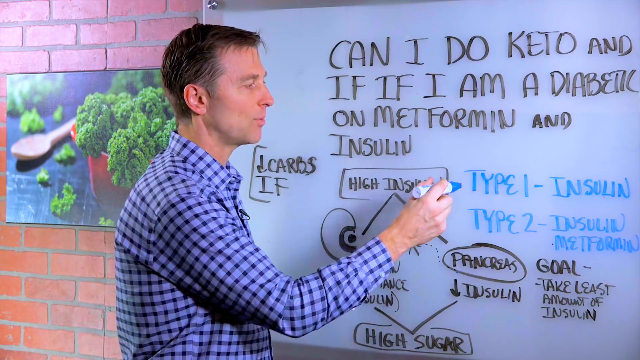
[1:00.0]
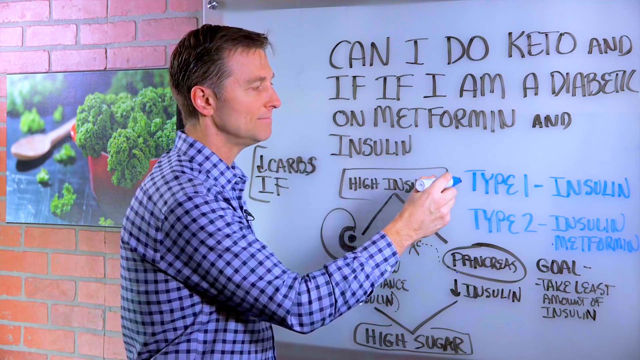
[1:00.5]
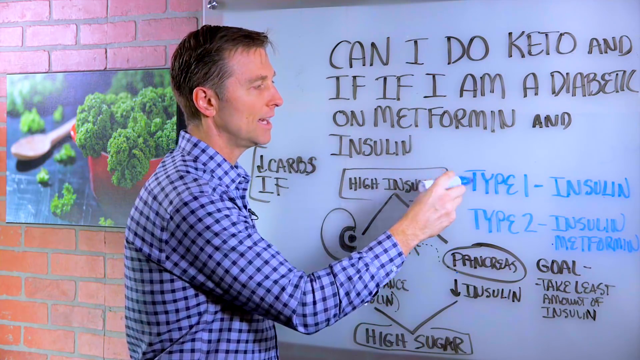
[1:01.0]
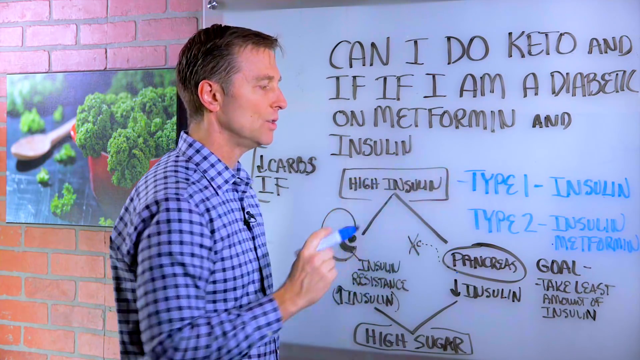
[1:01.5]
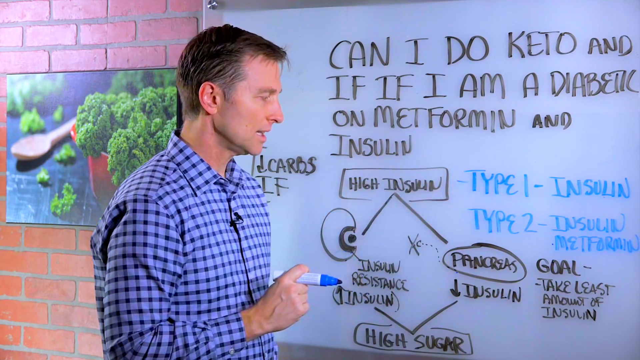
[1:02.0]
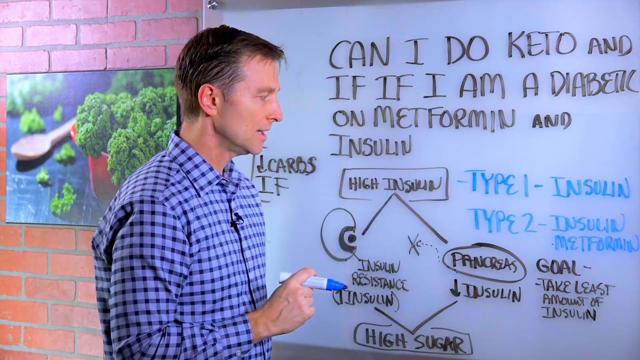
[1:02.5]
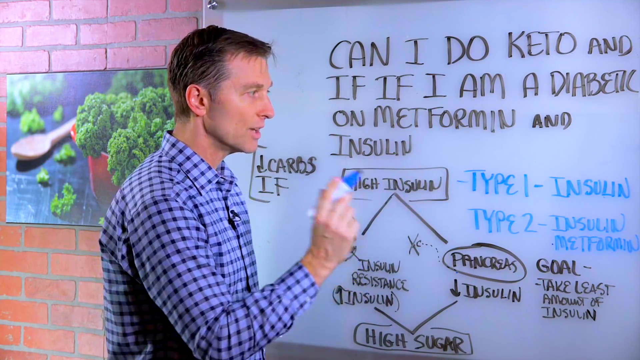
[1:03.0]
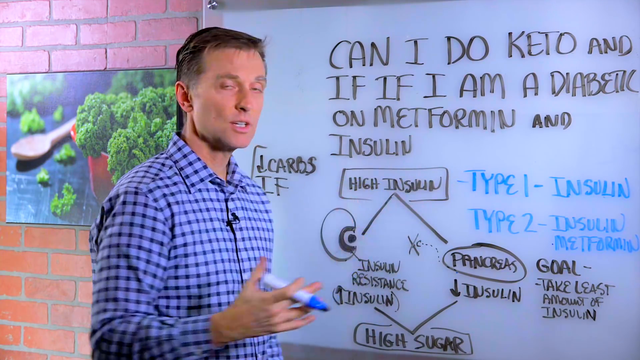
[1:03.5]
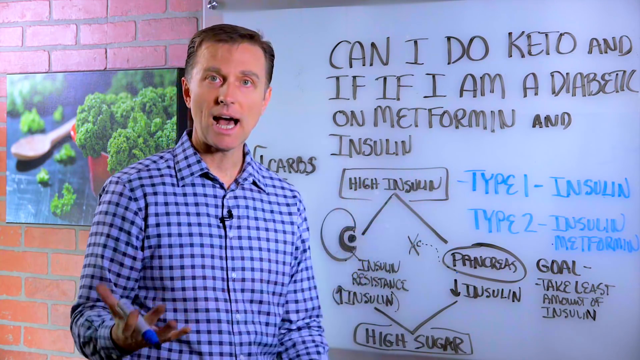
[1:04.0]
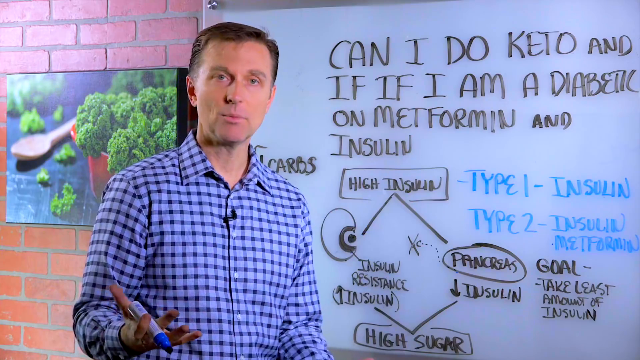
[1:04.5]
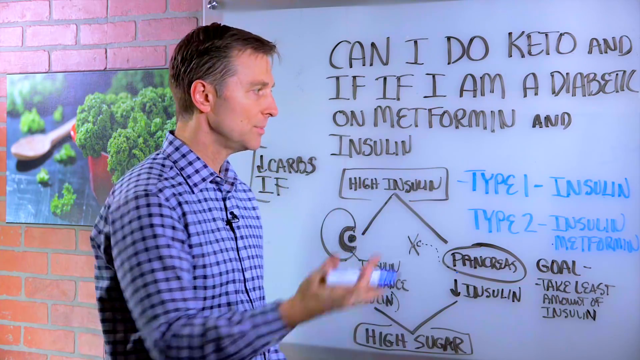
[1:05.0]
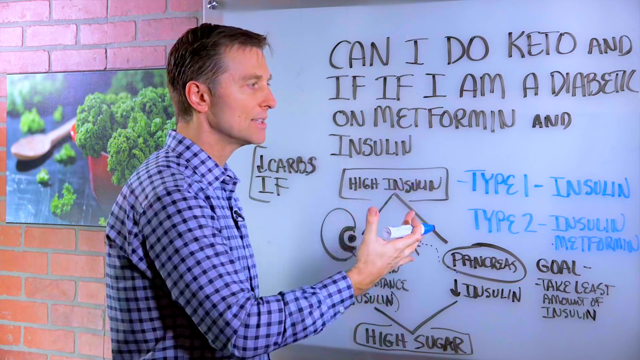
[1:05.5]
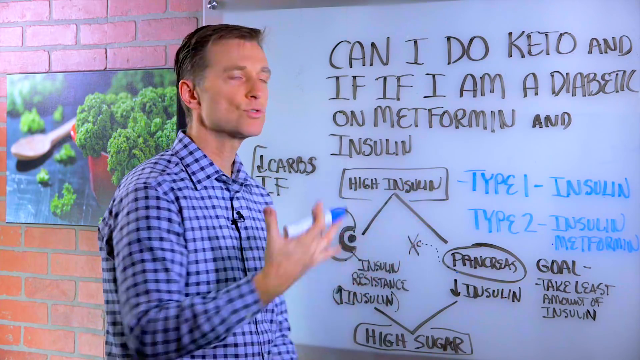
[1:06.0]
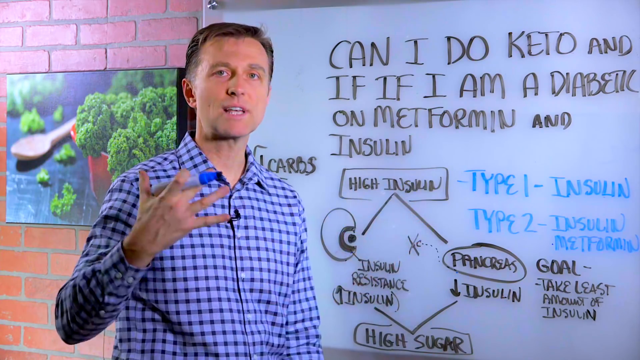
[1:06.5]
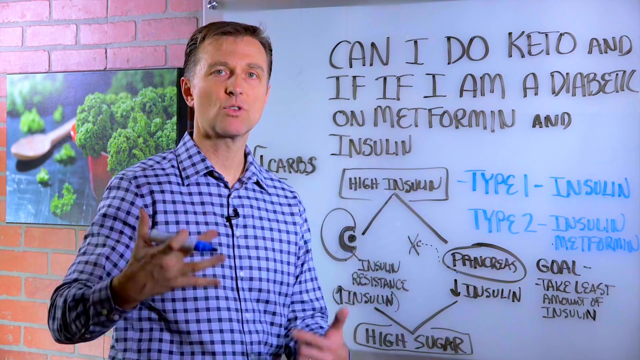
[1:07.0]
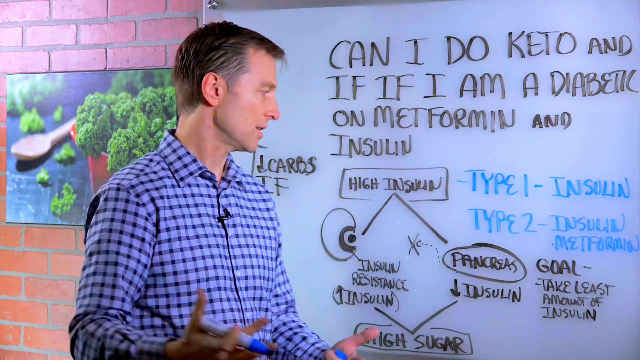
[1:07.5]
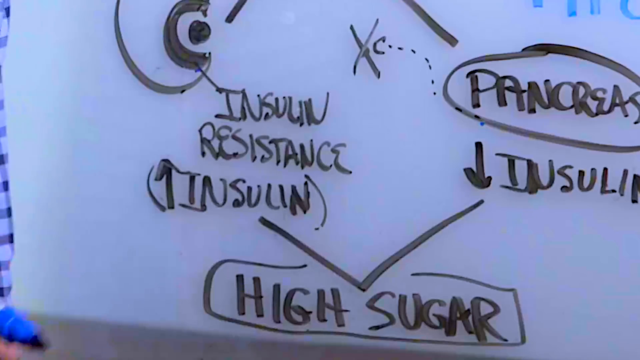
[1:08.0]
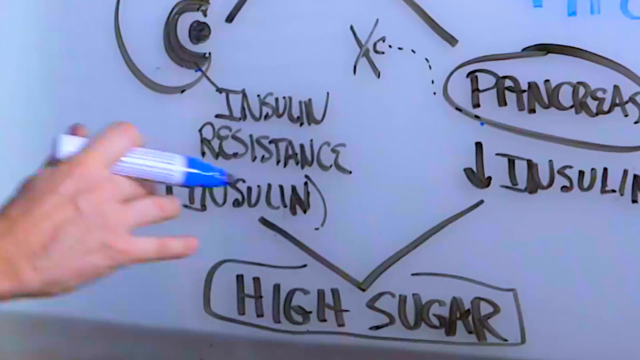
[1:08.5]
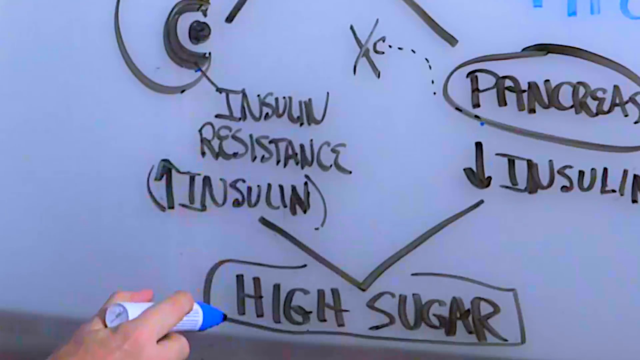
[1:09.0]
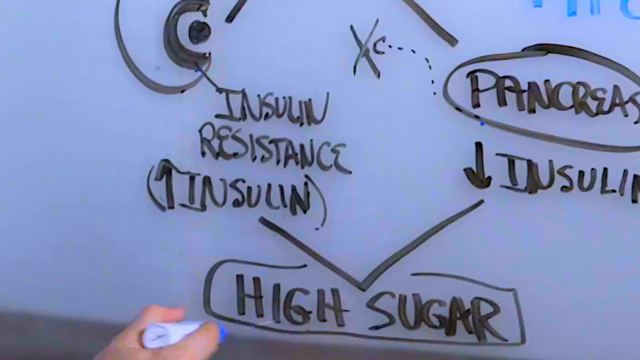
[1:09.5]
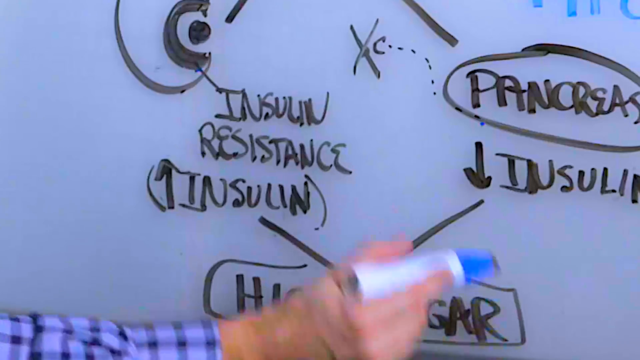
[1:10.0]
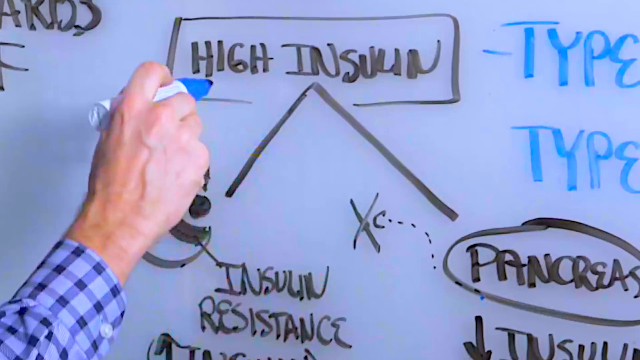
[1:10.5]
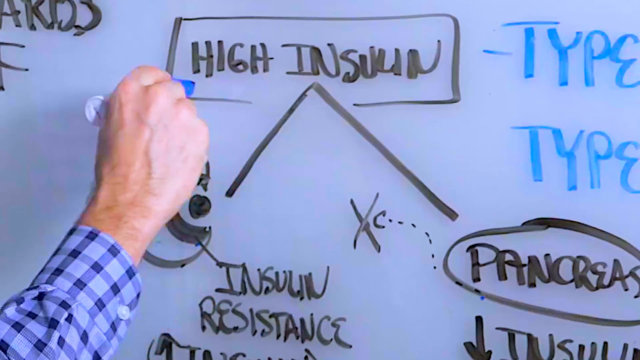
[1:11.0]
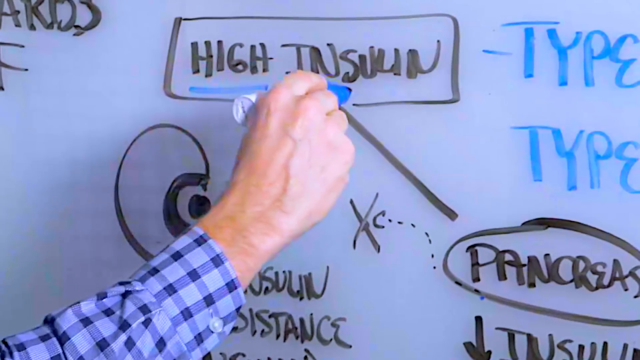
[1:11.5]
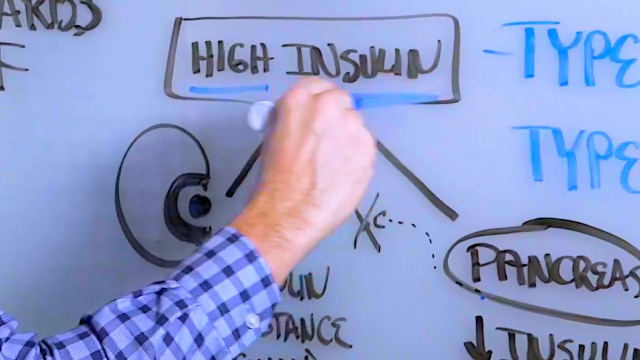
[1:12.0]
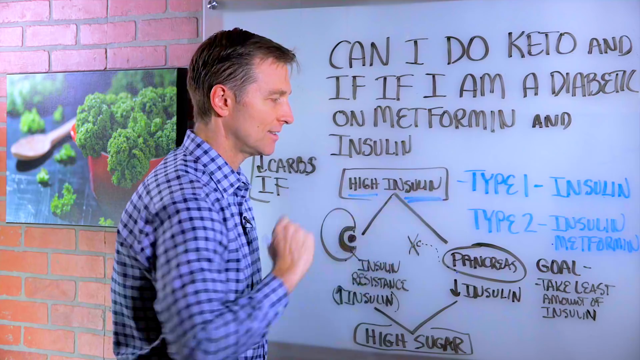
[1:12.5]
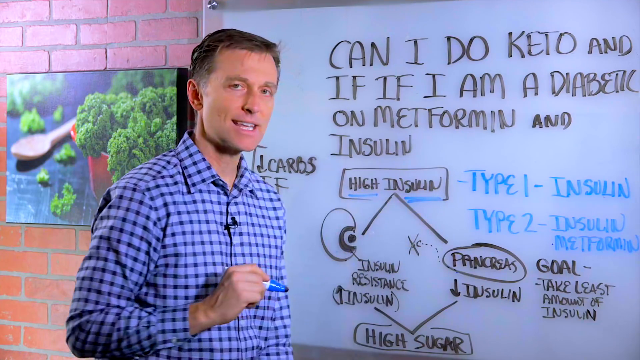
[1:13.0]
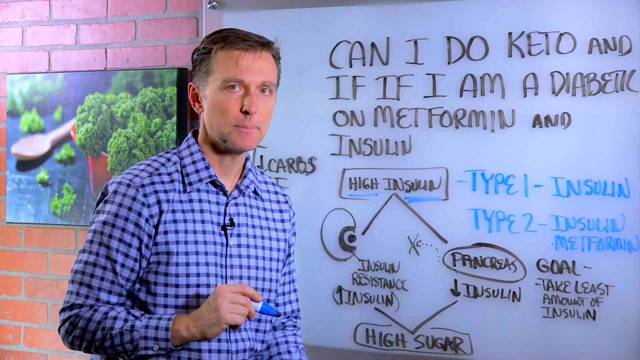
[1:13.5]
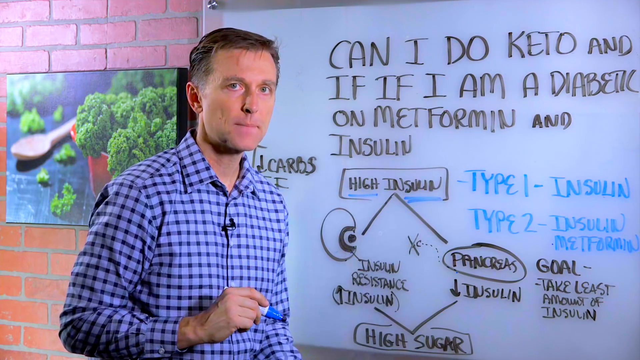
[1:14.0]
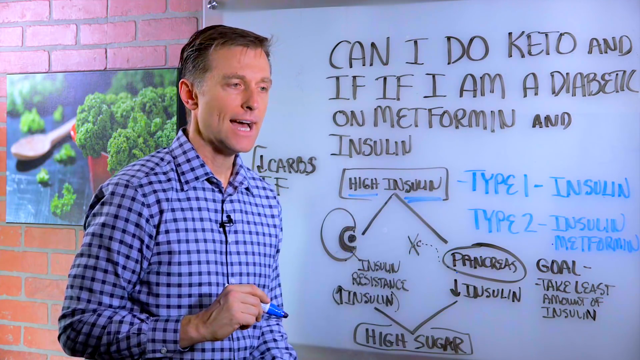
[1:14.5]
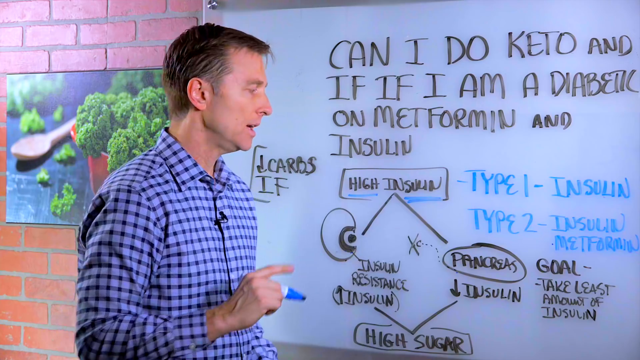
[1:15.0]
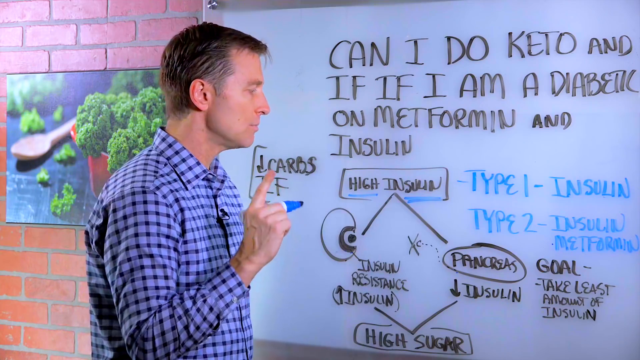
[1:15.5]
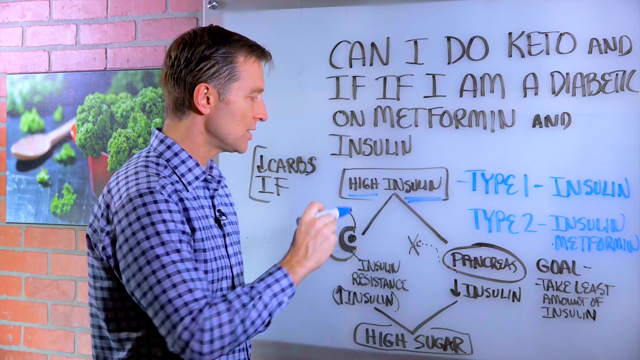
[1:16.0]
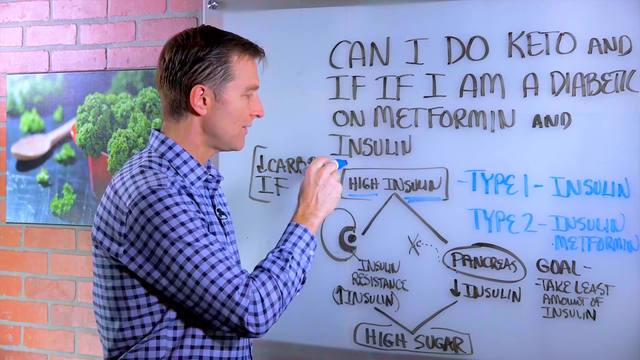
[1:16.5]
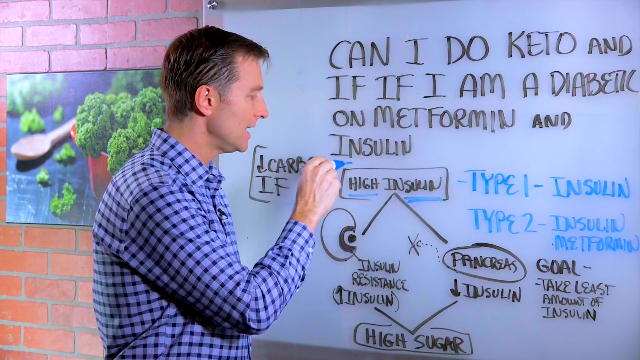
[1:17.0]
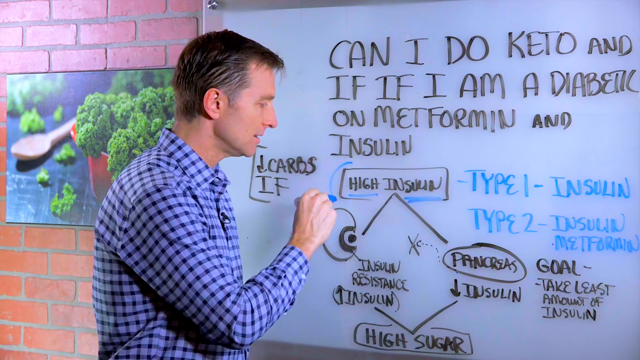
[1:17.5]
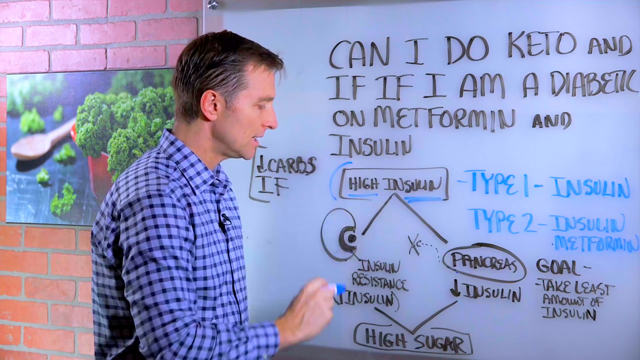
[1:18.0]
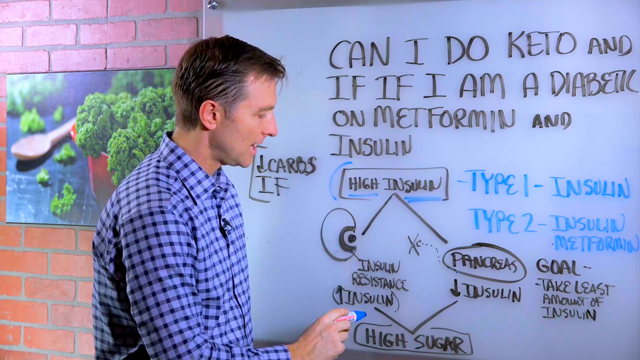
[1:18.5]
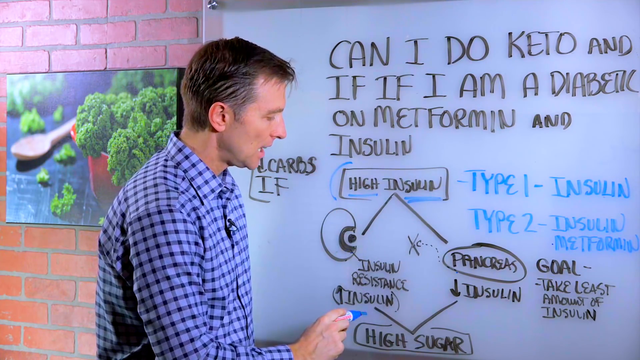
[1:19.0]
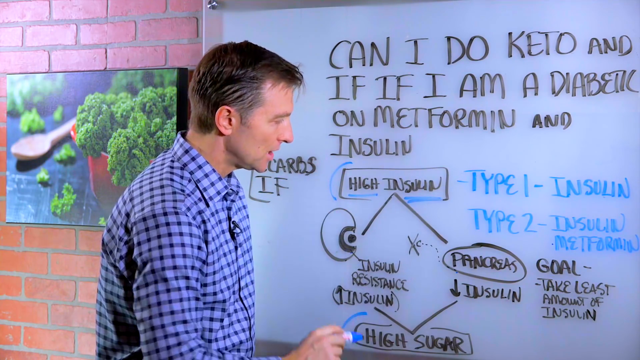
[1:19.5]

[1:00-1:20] The man looks at the camera, talking, and points at type one insulin with the blue marker. Suddenly the camera kind of pans in and zooms into the diagram on the whiteboard, getting really close to where it says high sugar. The camera then moves up to where it says high insulin, and he underlines high insulin with the blue marker. The camera pans back out to him as he talks to the camera, and he writes on the board, putting a half circle around high insulin and a half circle around high sugar with the blue marker.